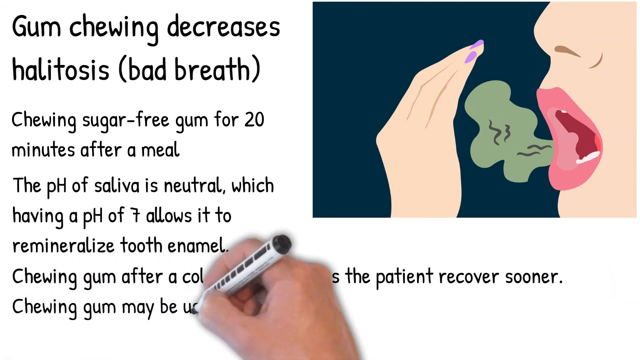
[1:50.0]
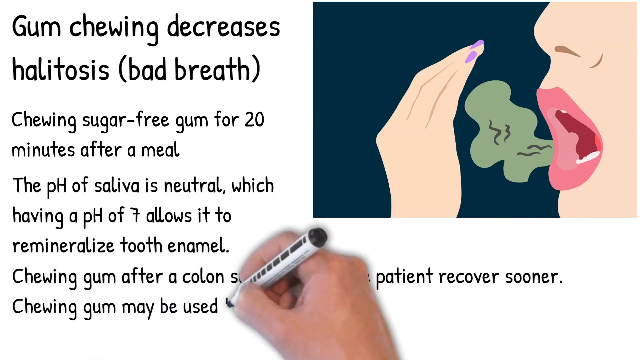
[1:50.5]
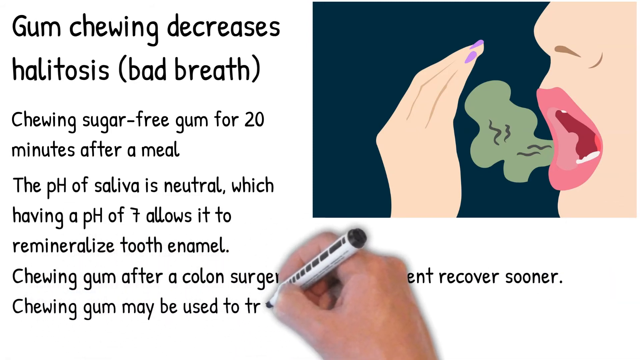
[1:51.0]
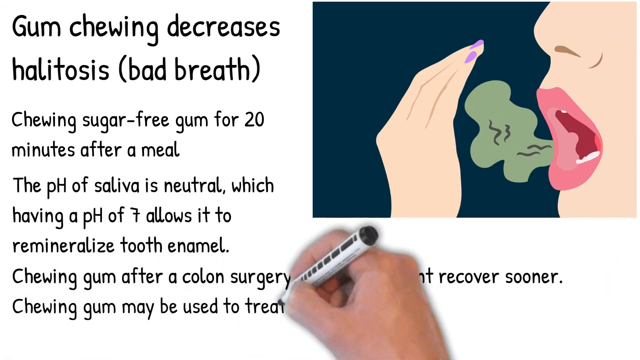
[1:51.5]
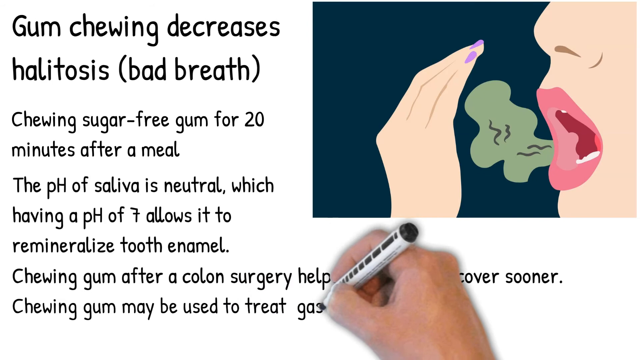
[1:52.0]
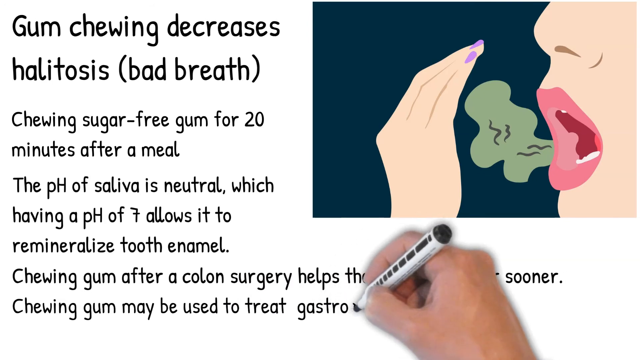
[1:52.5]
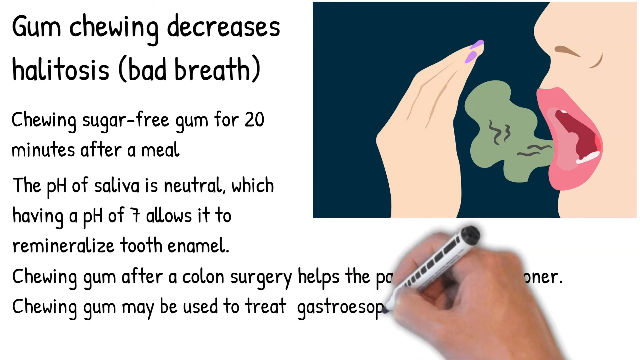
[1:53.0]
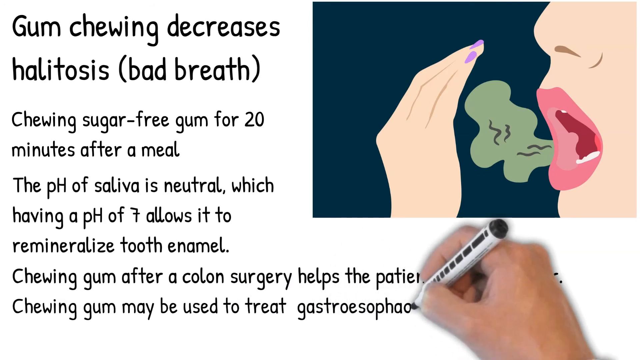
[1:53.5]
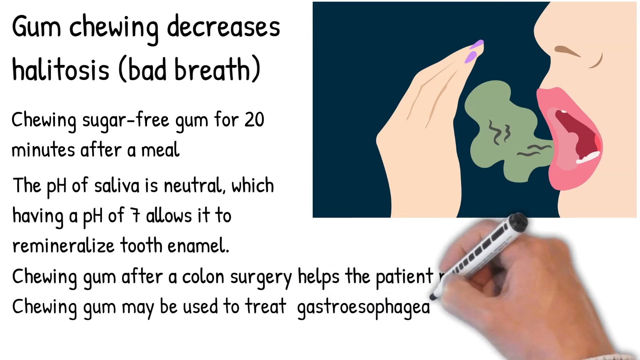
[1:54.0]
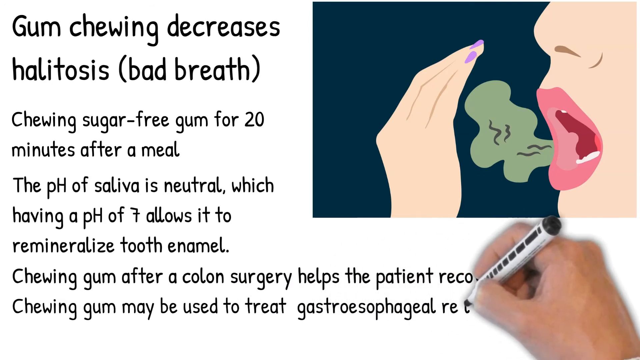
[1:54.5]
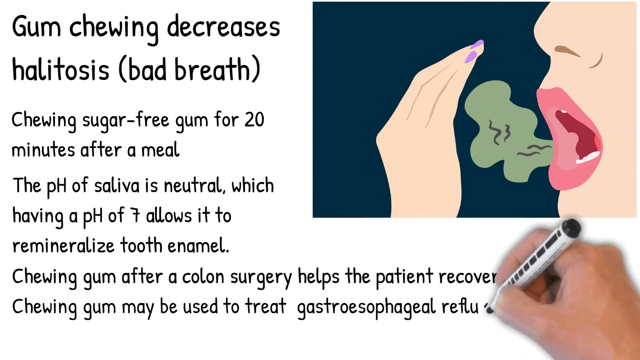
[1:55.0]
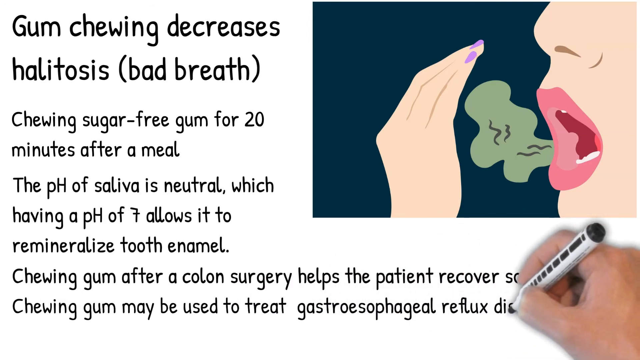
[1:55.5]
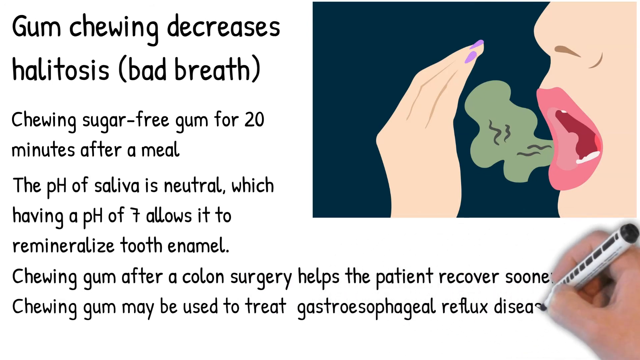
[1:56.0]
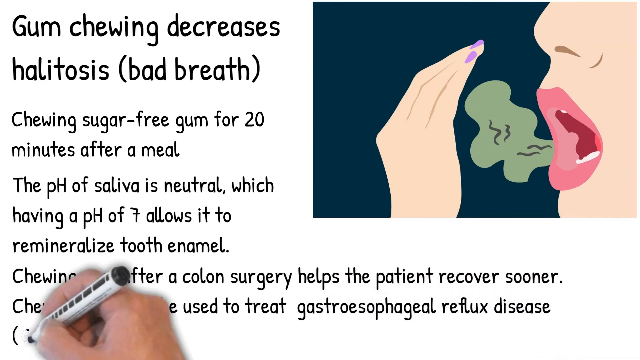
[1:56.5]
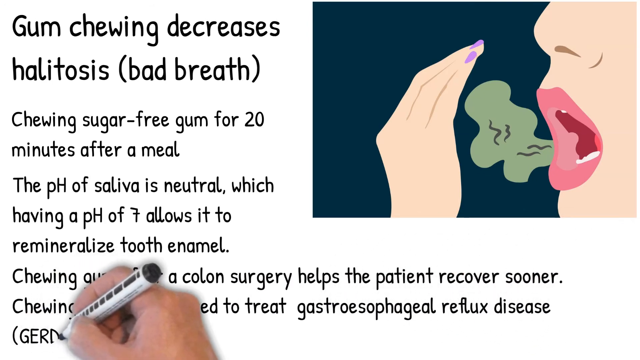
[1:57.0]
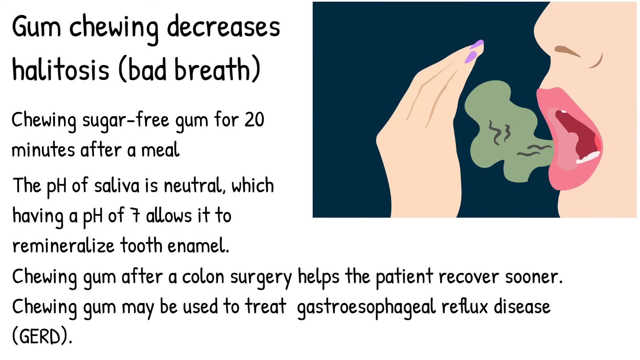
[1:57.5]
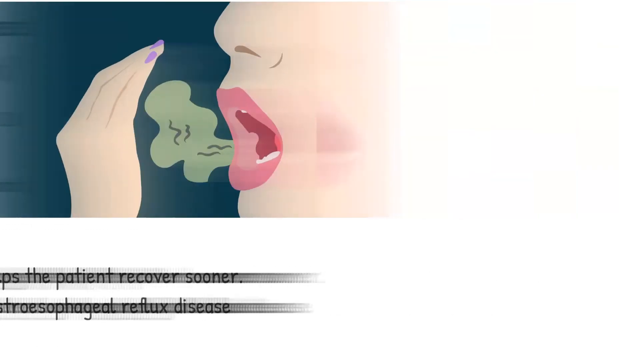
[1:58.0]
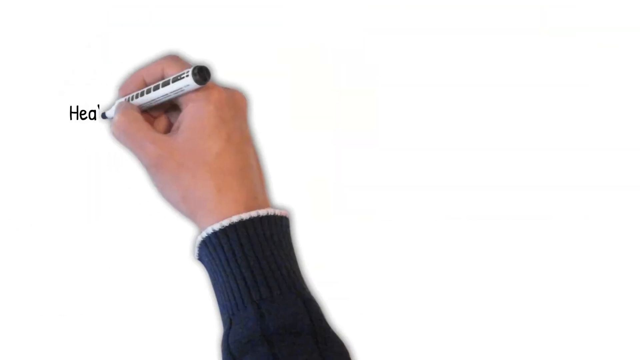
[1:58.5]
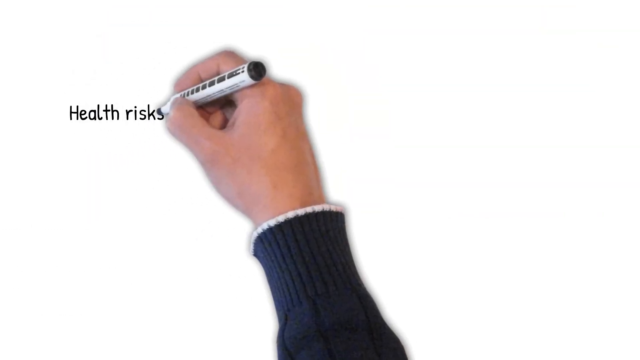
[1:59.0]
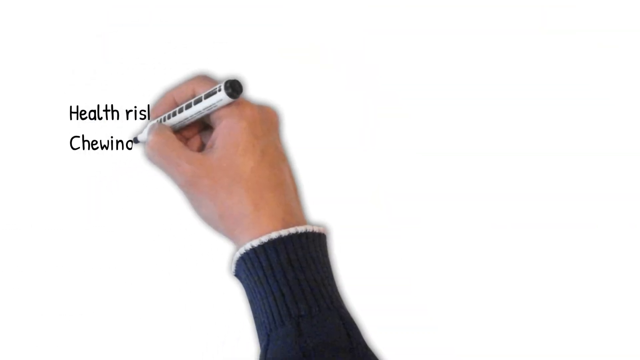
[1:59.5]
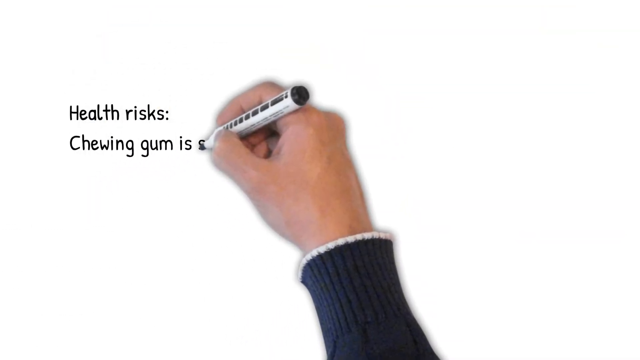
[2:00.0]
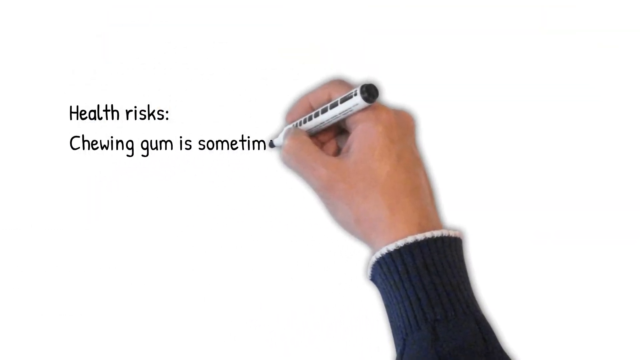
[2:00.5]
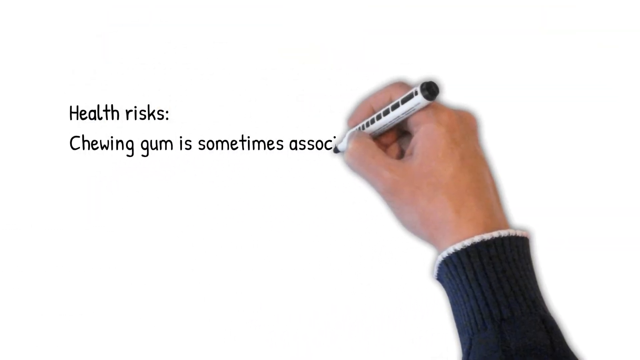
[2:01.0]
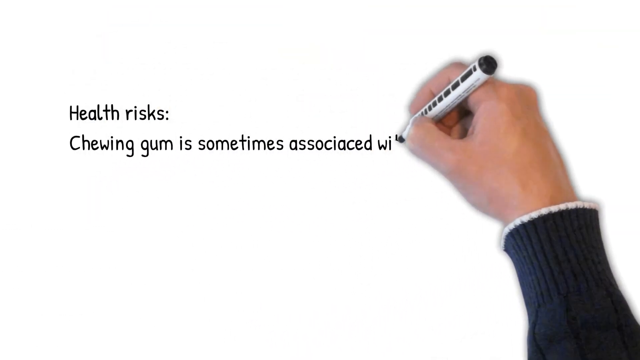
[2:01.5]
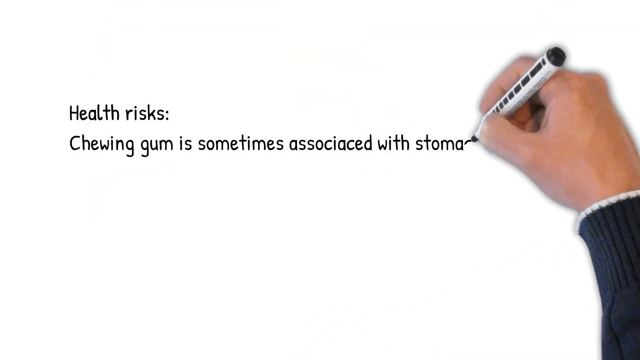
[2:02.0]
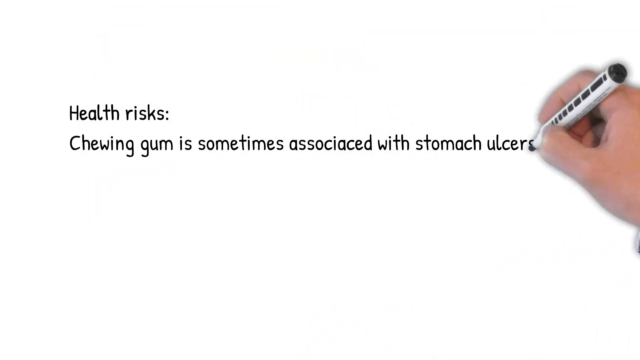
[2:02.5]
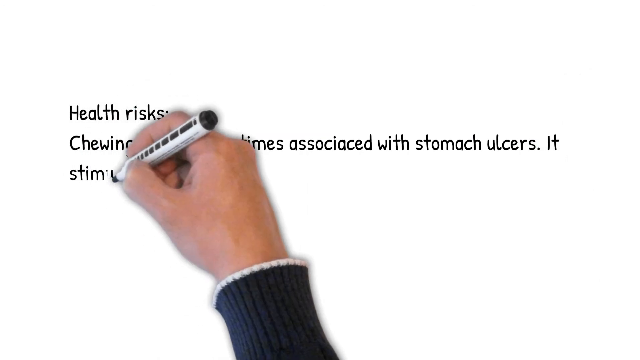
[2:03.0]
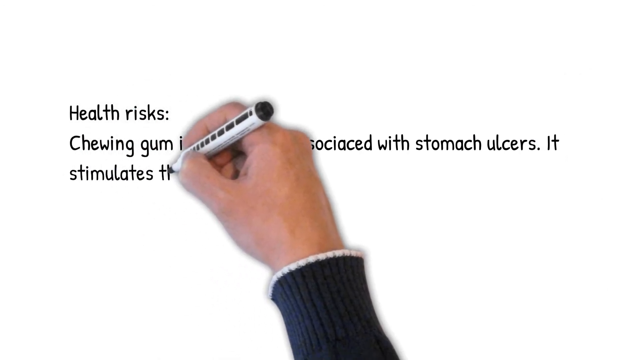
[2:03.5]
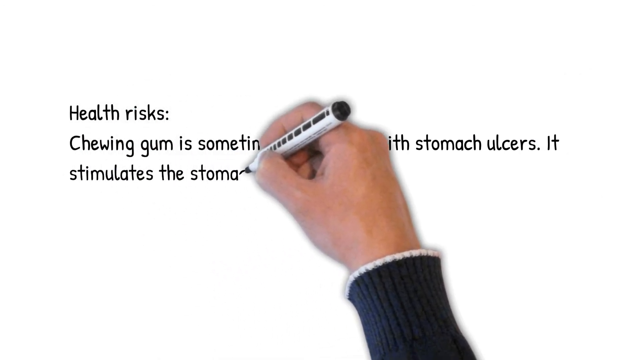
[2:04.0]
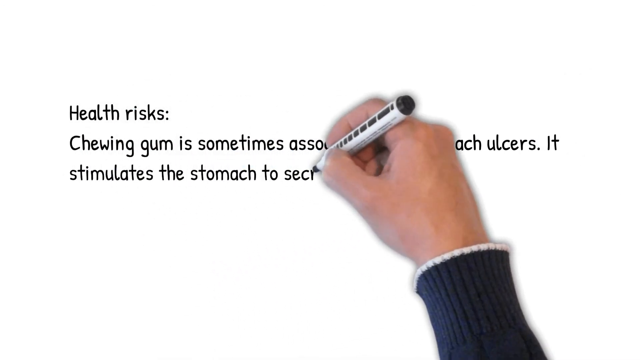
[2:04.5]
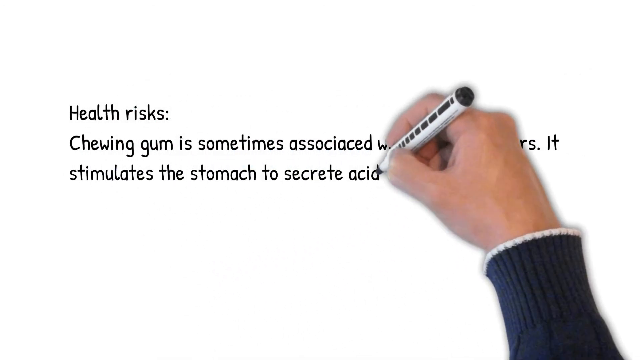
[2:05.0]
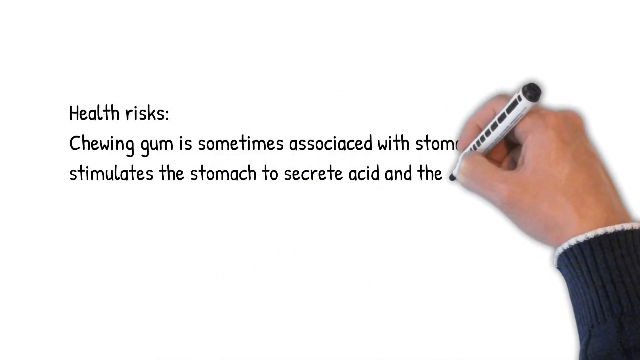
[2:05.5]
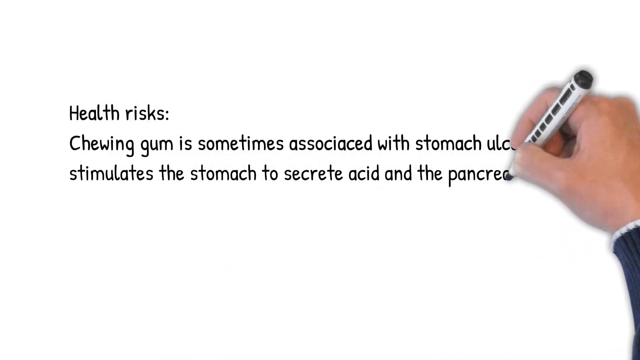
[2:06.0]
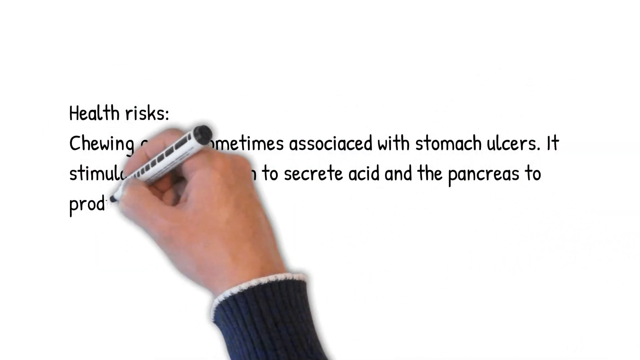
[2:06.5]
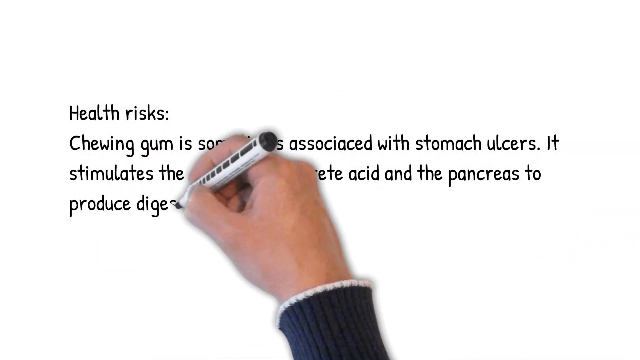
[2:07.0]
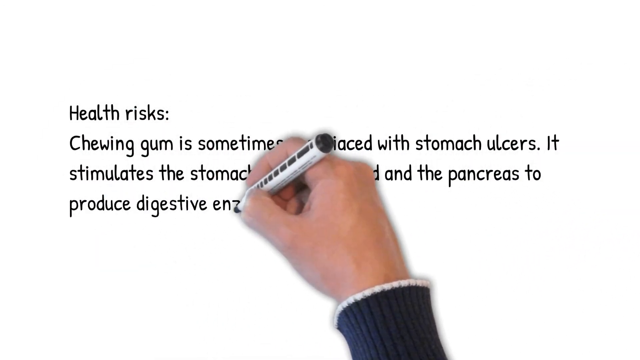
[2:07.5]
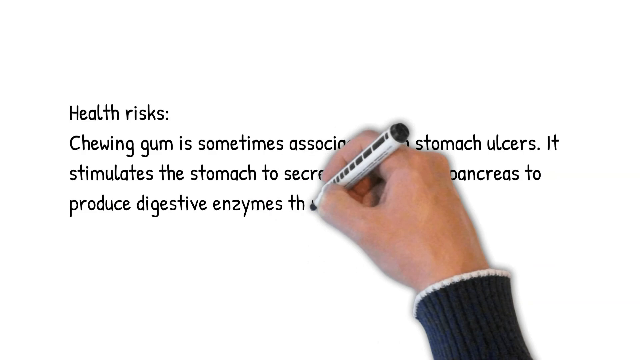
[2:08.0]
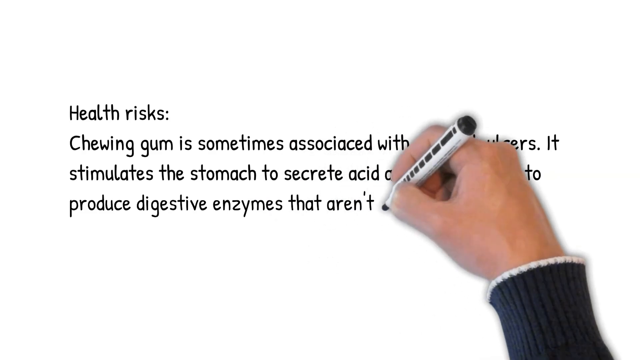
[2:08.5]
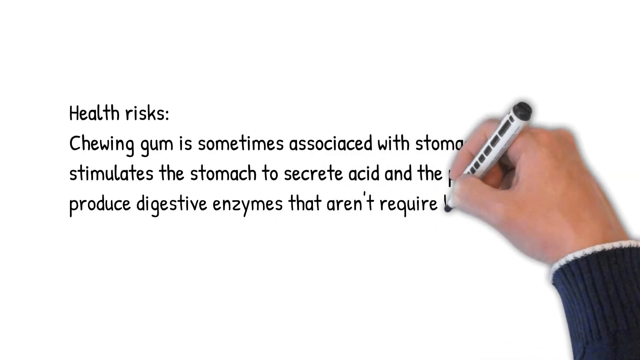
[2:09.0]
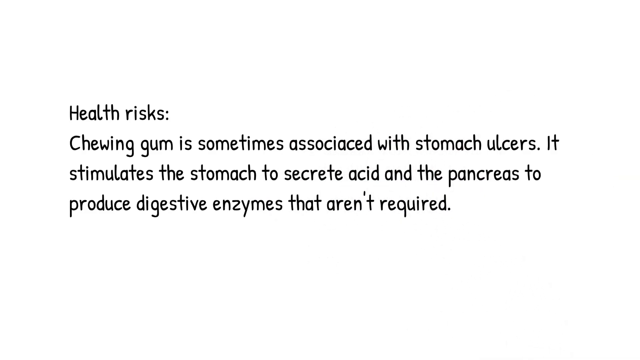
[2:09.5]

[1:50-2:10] The hand continues writing the text at the bottom of the image, which reads "chewing gum may be used to treat gastroesophageal reflux disease (GERD)". The screen then swipes to the left, leaving a blank white screen. The hand moves to the centre and writes "health risks. Chewing gum is sometimes associated with stomach ulcers. It stimulates the stomach to secrete acid and the pancreas to produce digestive enzymes that aren't required." The pen the hand holds is black with a white cover around it, a black tip, a black base, and a black and white striped pattern. The hand then disappears, moving to the right of the screen, leaving the black text in the middle of the white background. The video pauses on this screen.